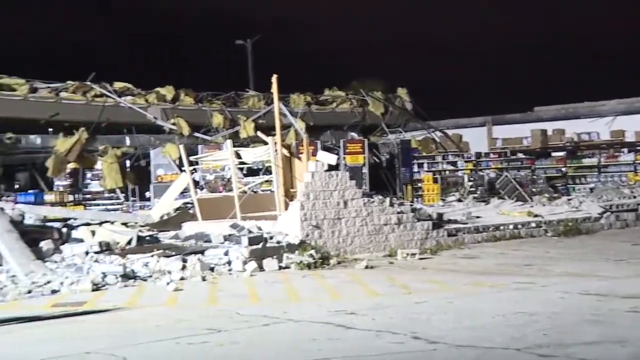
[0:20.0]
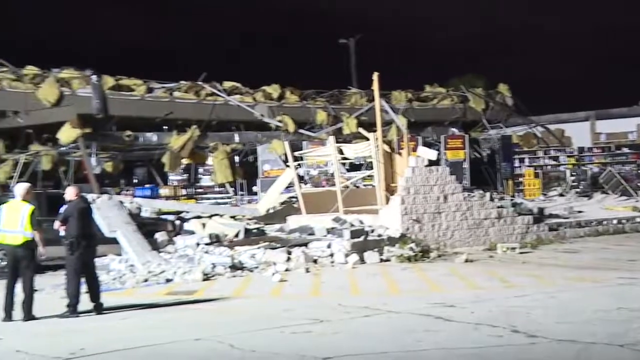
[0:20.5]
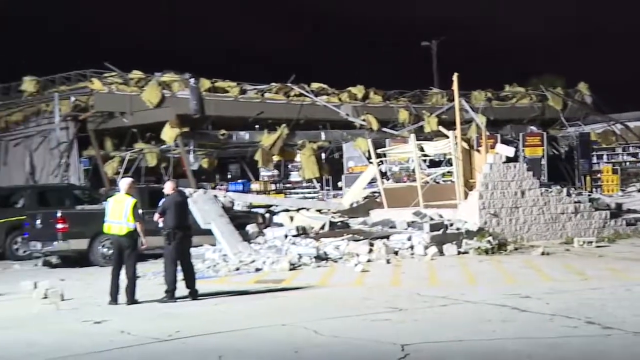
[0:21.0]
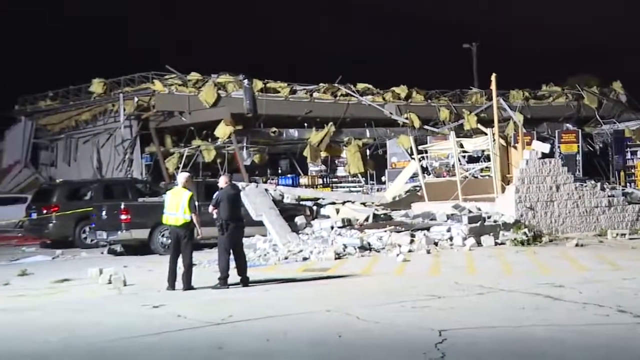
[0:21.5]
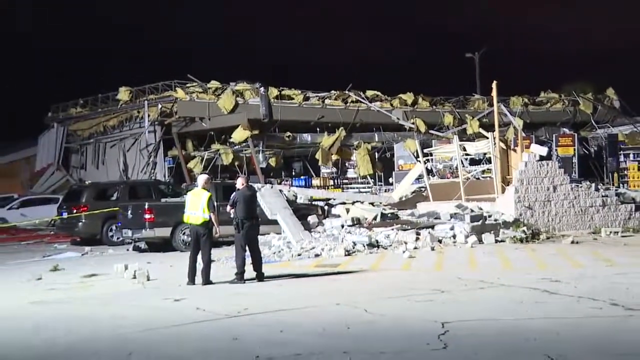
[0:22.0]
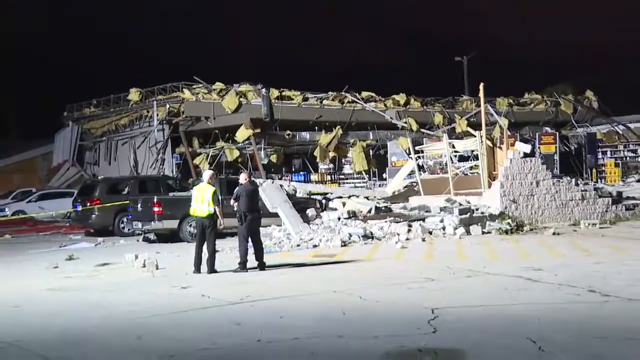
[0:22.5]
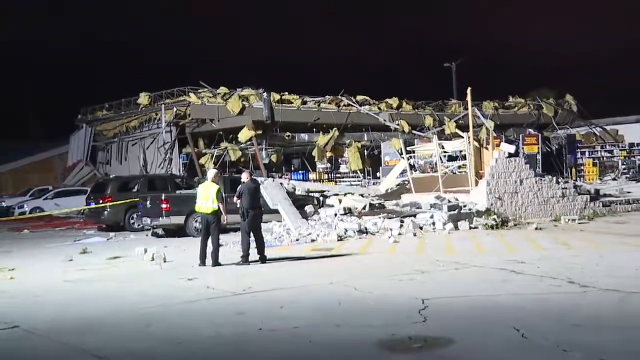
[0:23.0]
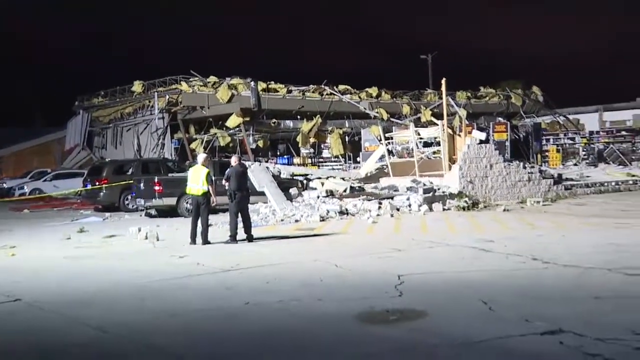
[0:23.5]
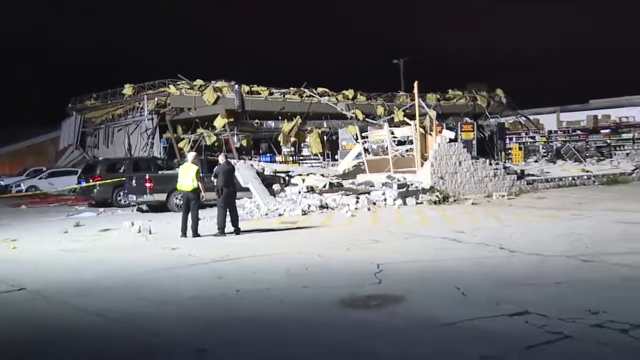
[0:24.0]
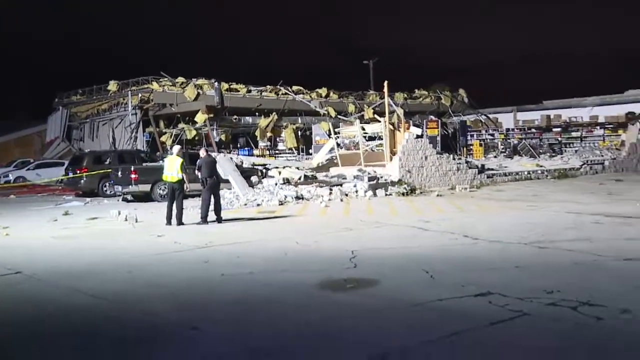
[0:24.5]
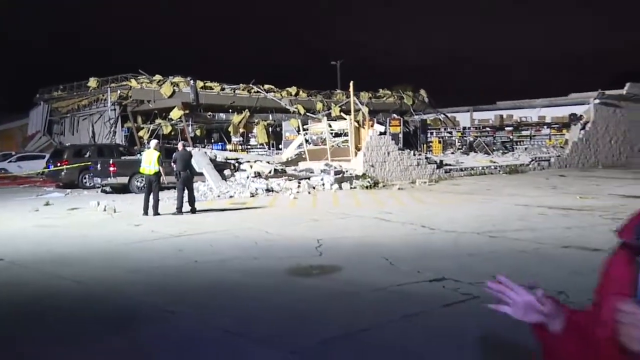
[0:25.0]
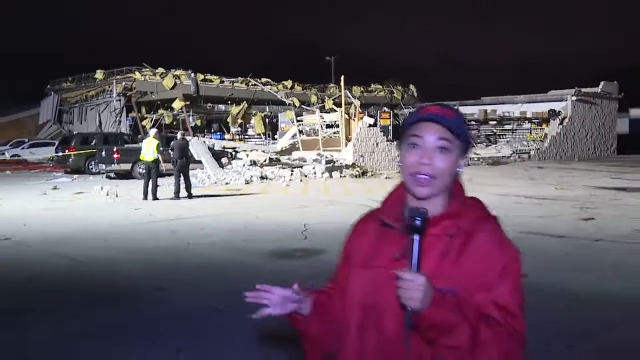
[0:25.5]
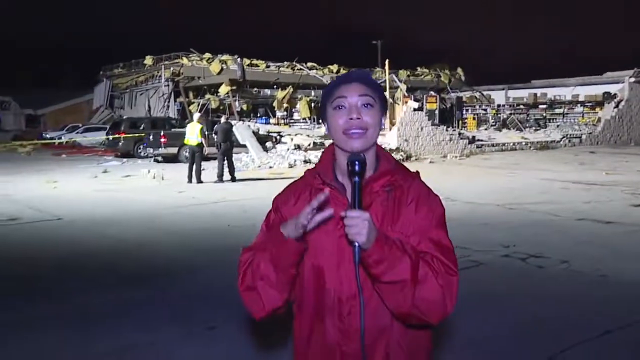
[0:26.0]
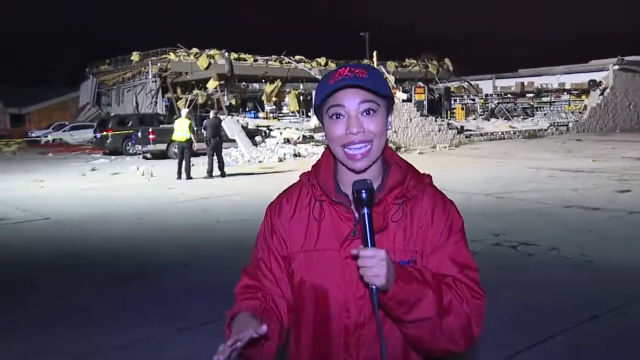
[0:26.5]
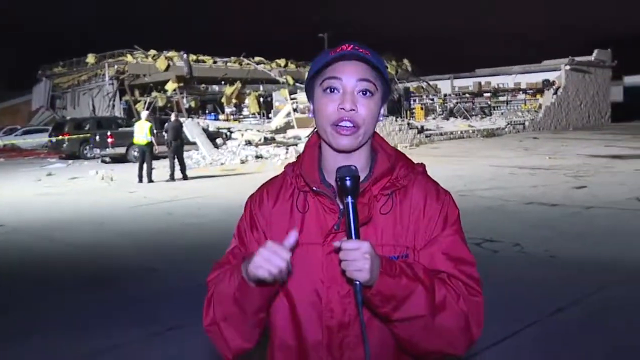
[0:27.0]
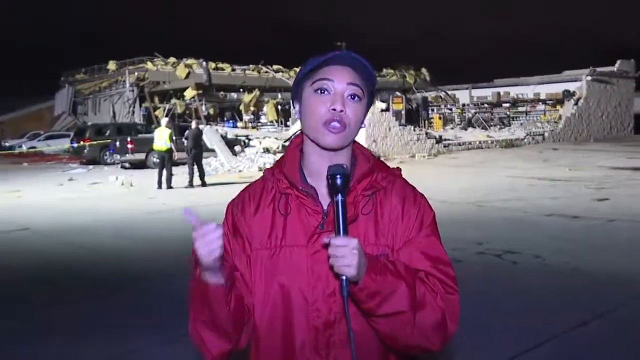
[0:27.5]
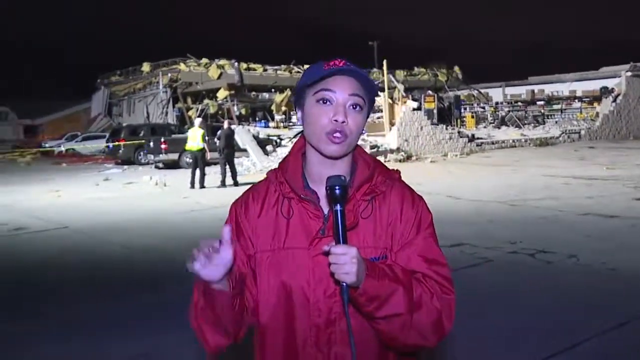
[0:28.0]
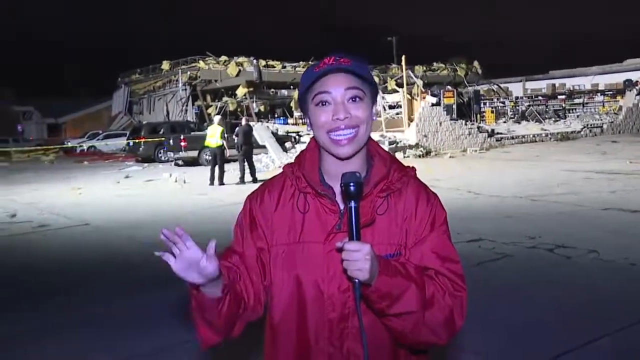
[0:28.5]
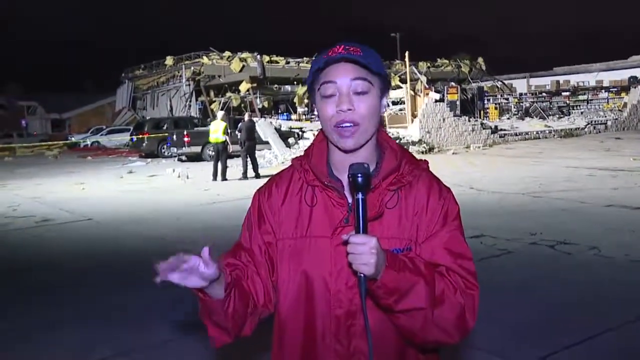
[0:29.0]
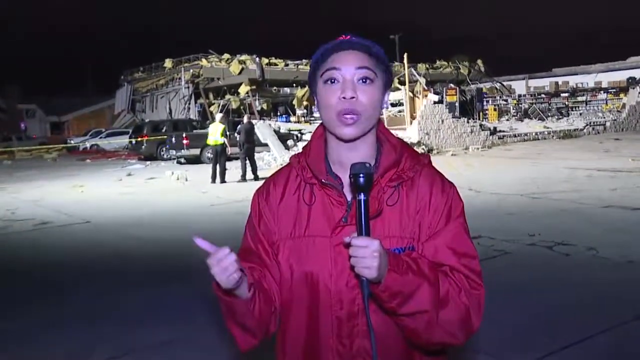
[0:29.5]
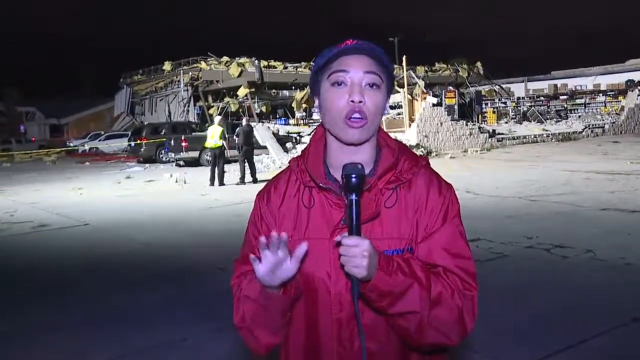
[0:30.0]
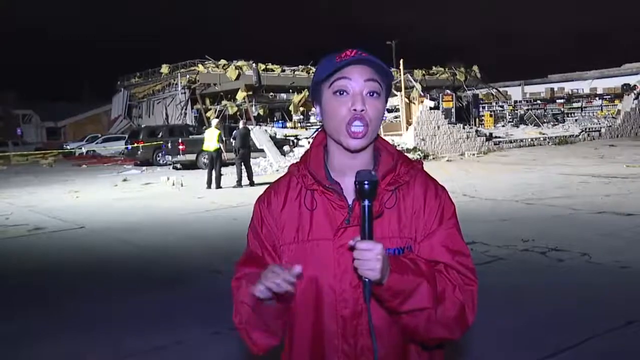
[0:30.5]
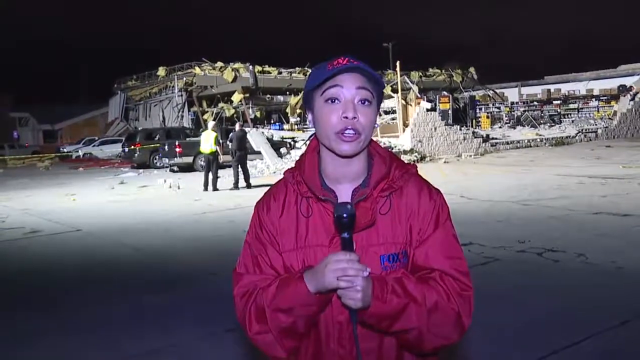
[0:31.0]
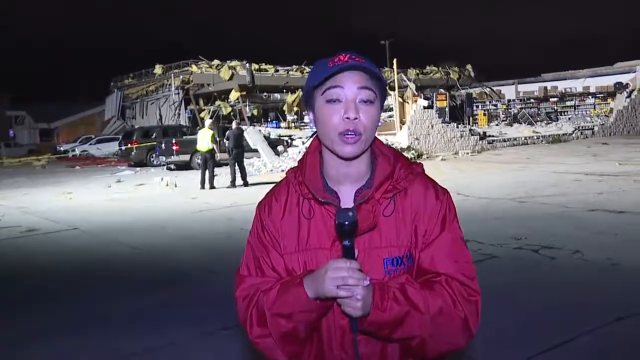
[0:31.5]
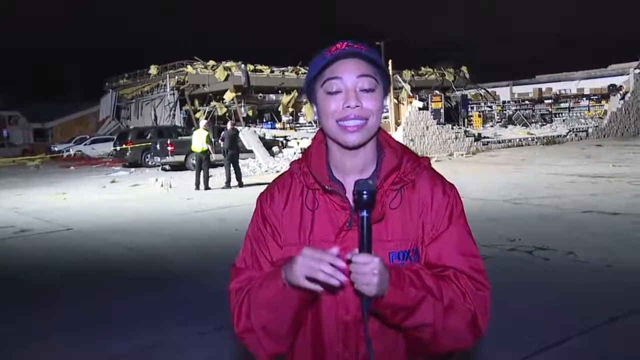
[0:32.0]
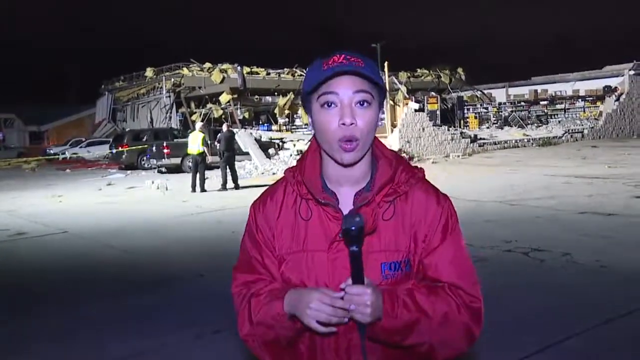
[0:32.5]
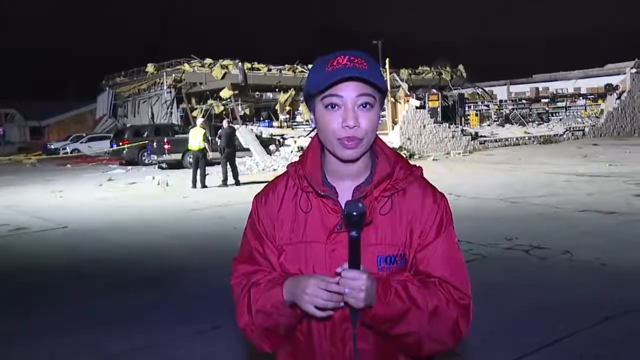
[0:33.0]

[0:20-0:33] More of the devastation caused by the tornado is shown. The building looks like a combination gas station and convenience store, and its brick wall is totally demolished. The damage takes up more of the footage and the reporter less, though she still appears. The roof has been completely ripped off the building, and what appear to be yellow remains of insulation from the roof are visible.